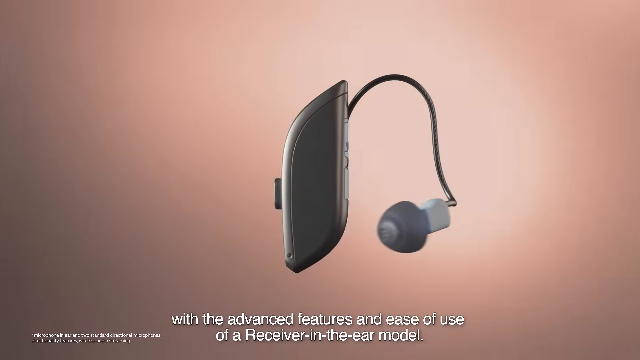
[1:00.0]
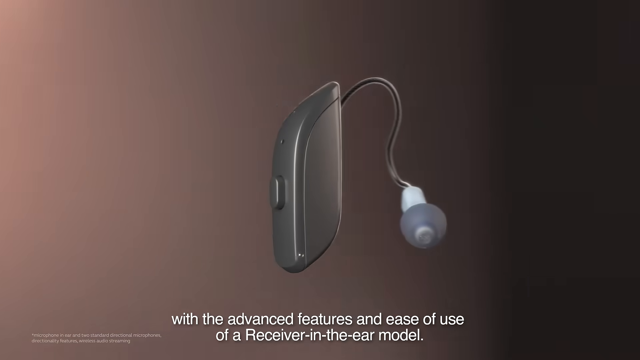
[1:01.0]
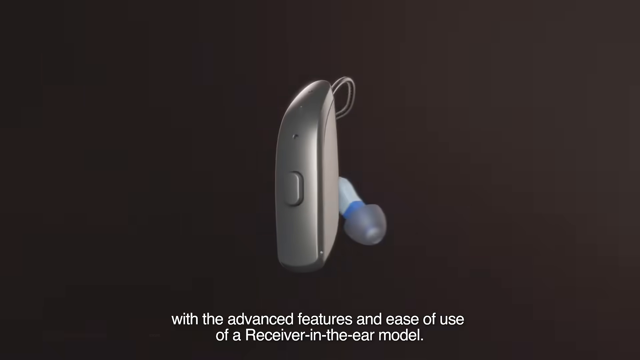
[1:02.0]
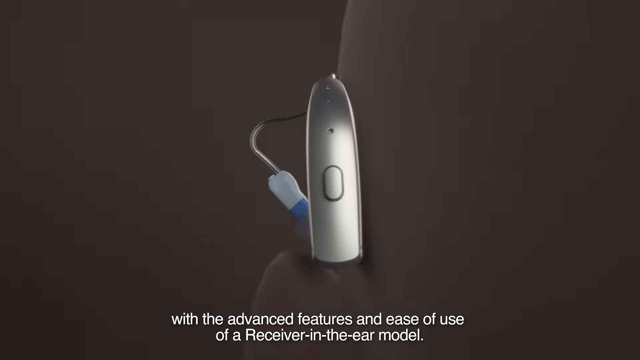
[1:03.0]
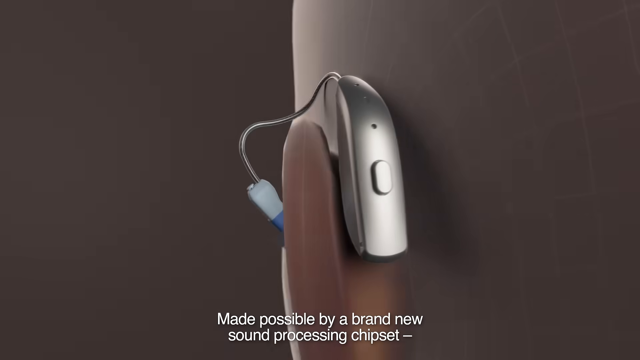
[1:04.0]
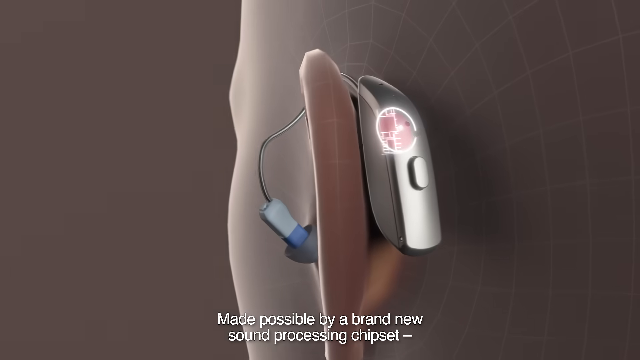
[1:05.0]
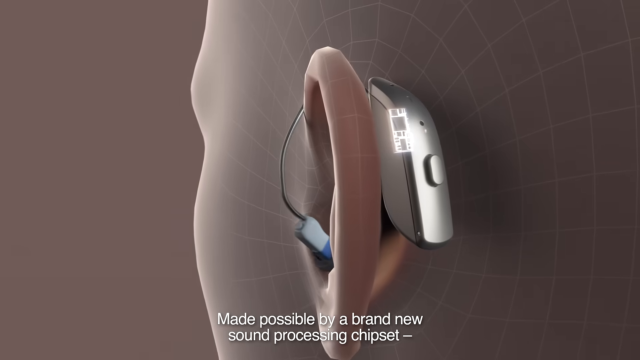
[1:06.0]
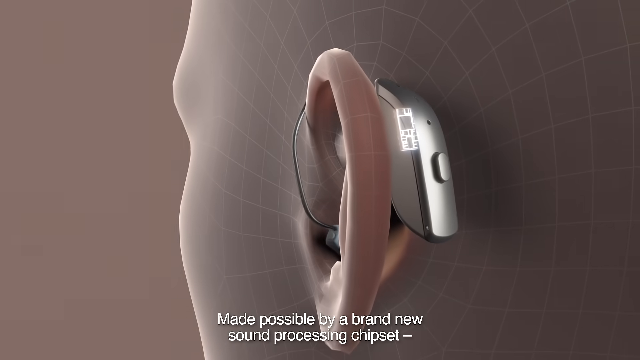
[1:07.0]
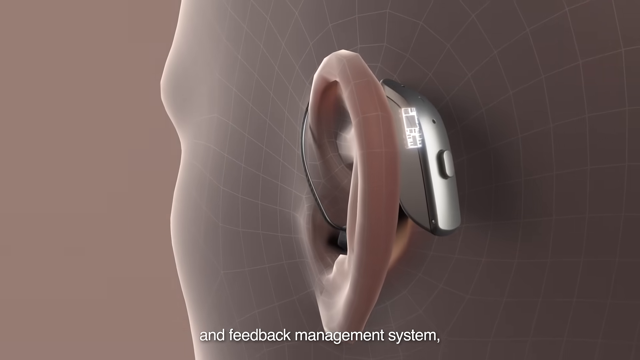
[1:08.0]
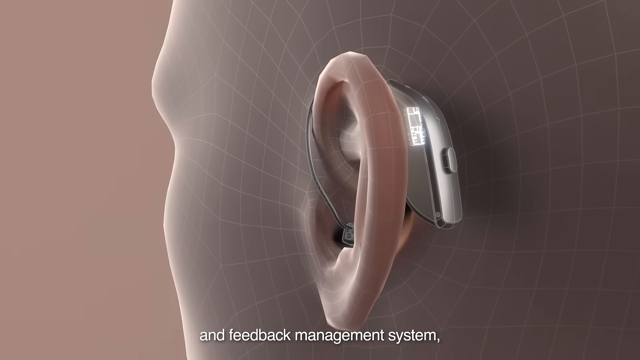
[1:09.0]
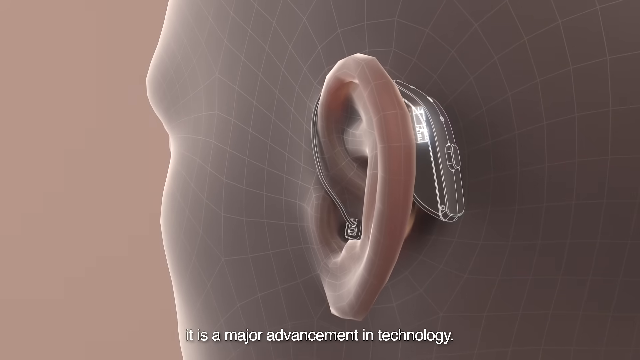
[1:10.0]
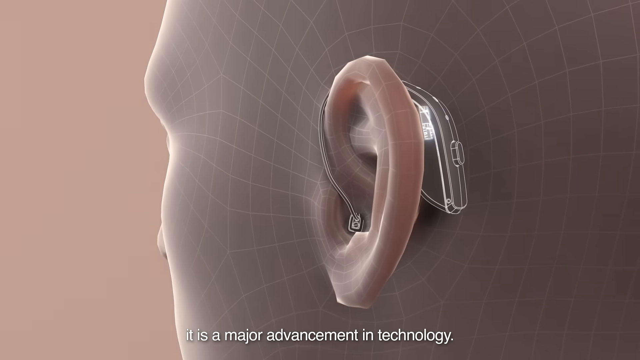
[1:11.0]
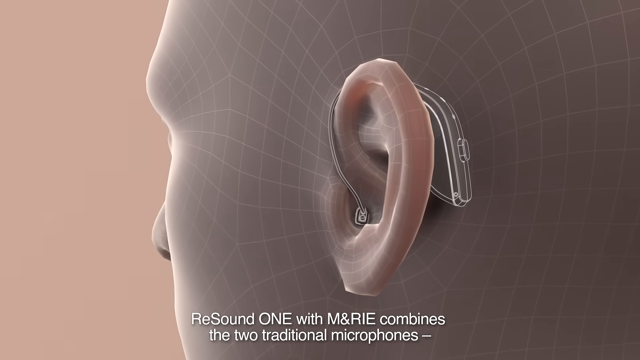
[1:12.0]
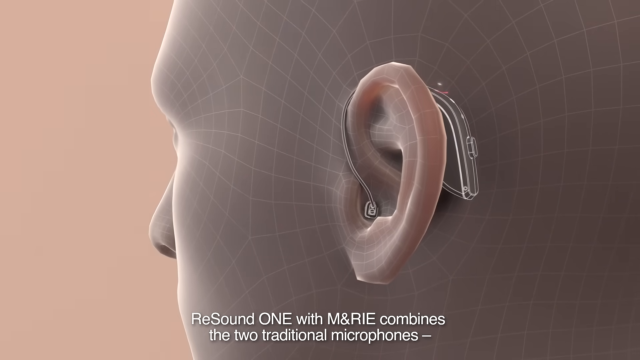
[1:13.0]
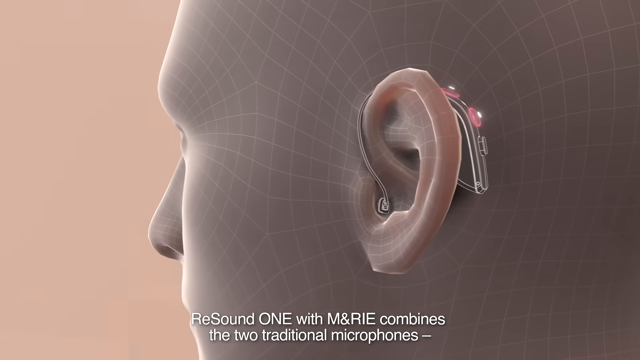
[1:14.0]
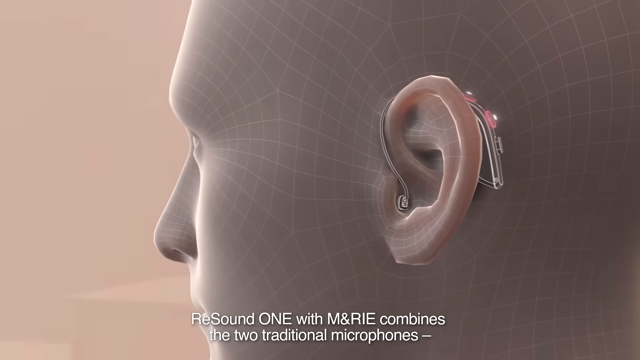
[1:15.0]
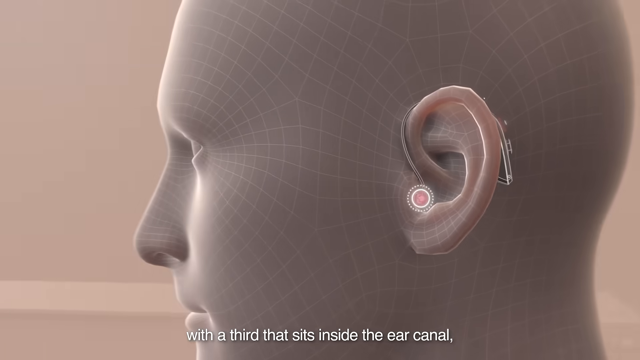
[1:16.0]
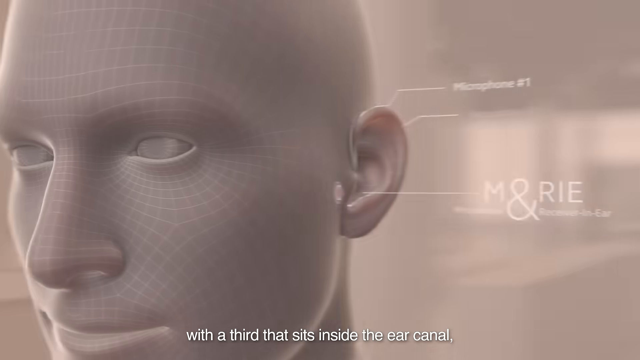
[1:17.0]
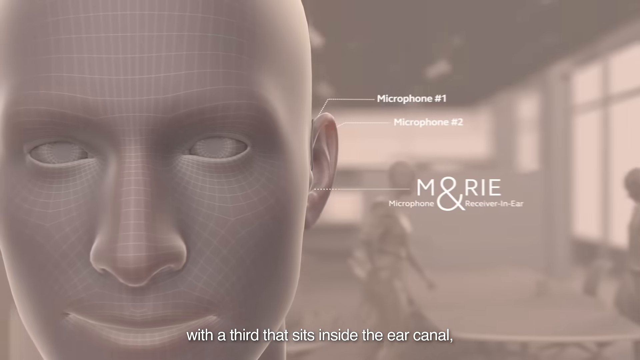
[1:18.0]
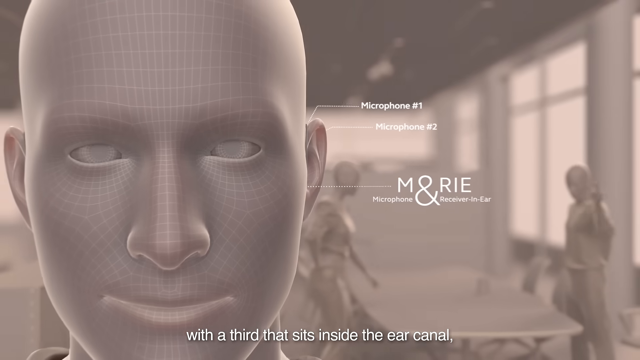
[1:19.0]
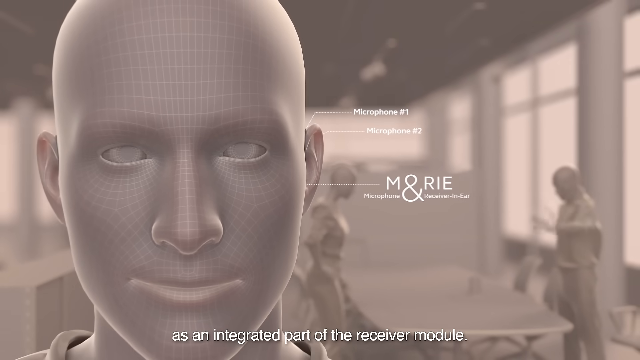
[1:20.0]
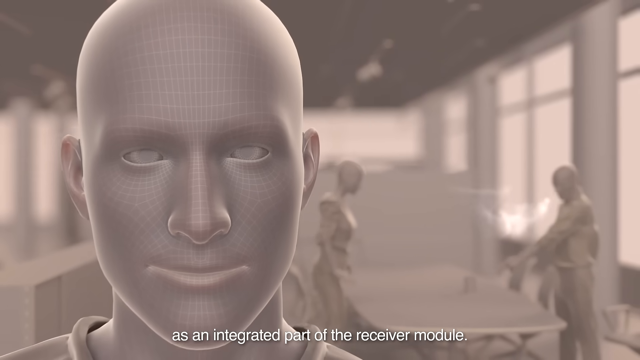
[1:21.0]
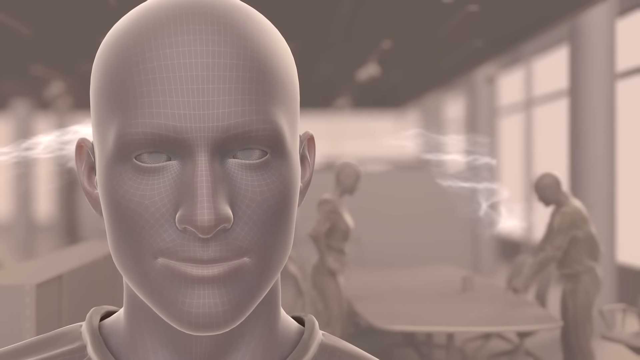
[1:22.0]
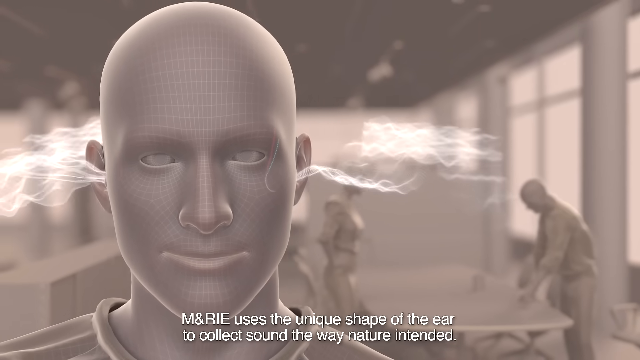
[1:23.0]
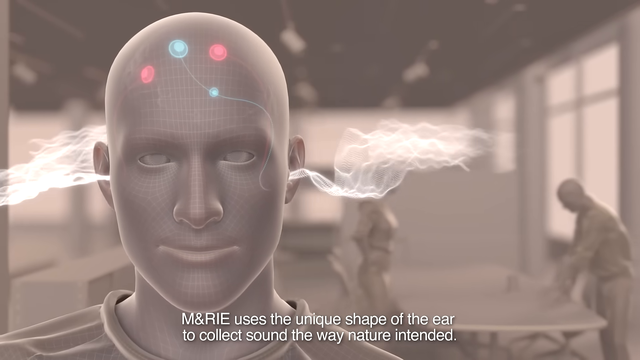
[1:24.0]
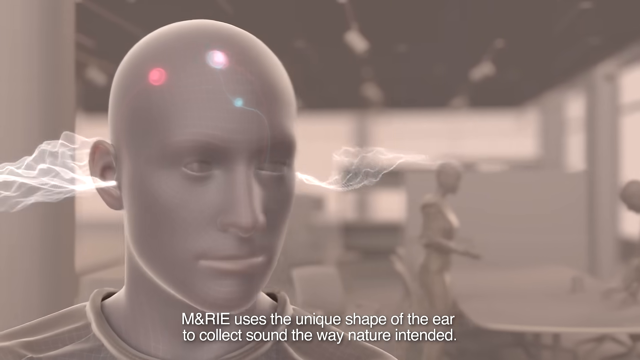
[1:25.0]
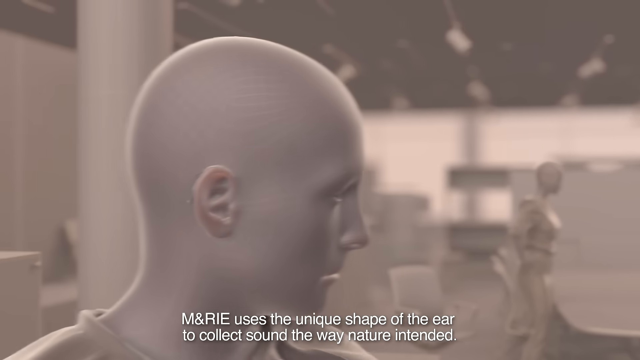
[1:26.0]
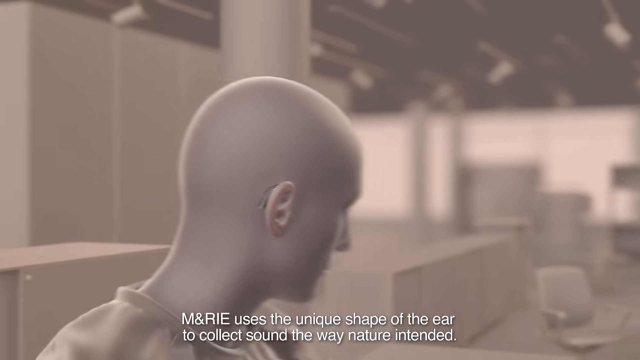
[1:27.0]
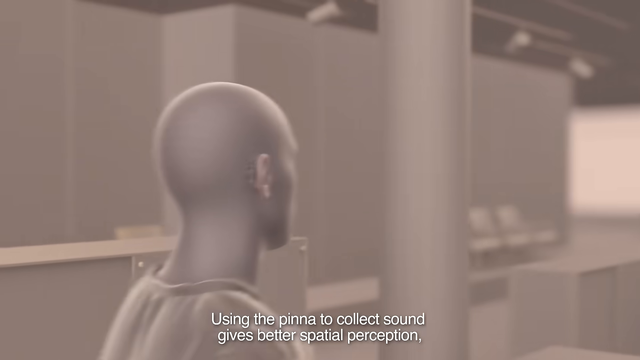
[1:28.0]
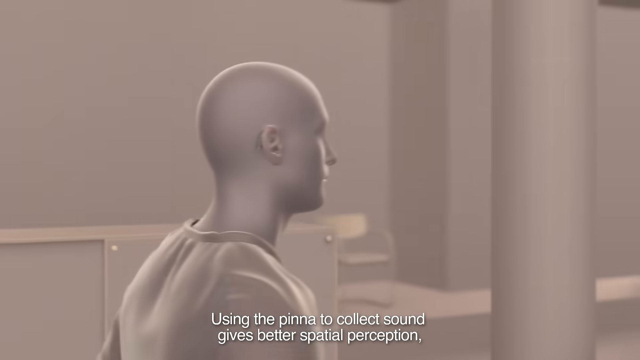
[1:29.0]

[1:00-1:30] A hearing aid, apparently a technologically advanced electronic device, is shown being attached to an ear. The device has two parts, a receiver and a microphone.